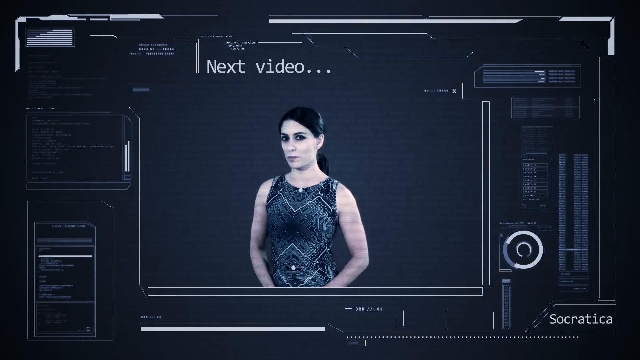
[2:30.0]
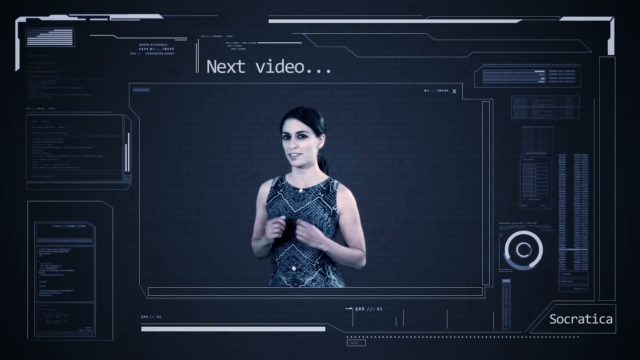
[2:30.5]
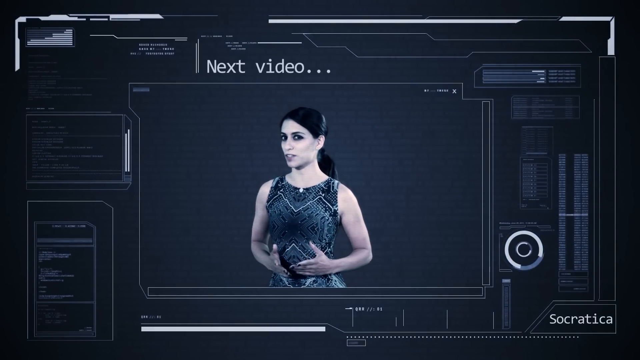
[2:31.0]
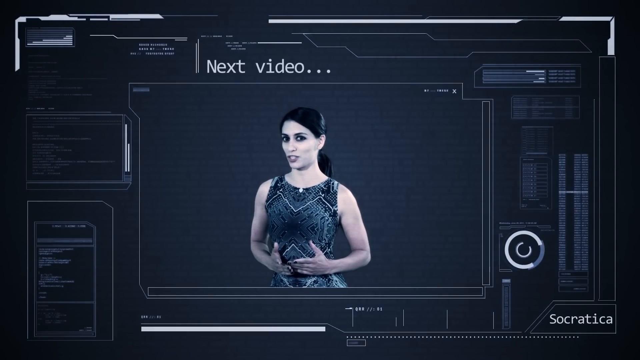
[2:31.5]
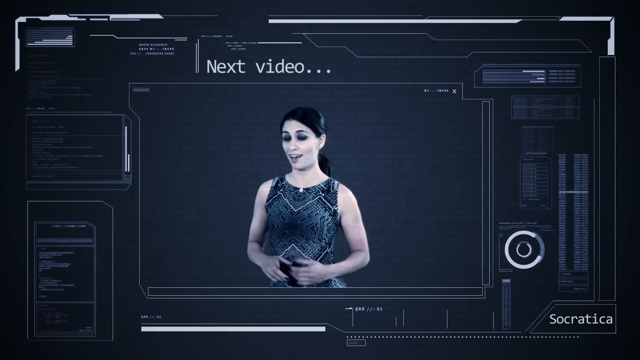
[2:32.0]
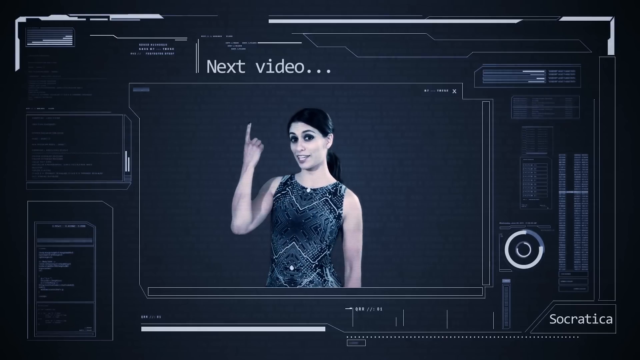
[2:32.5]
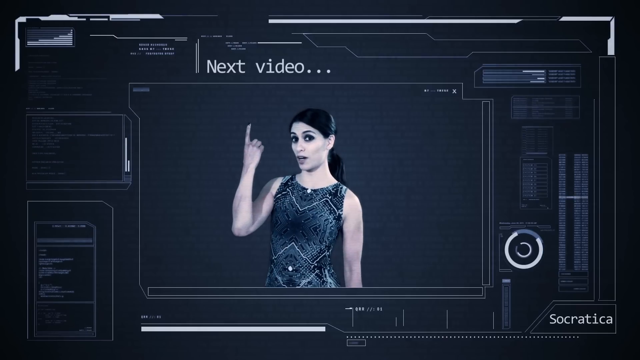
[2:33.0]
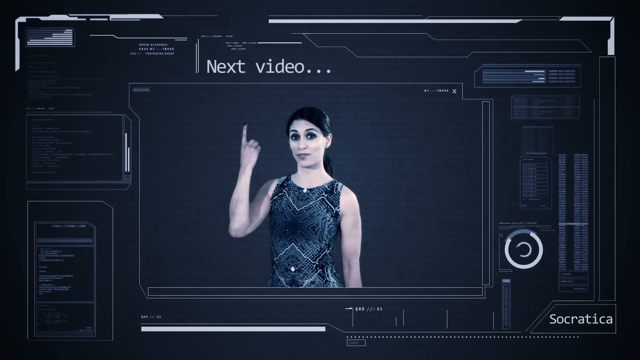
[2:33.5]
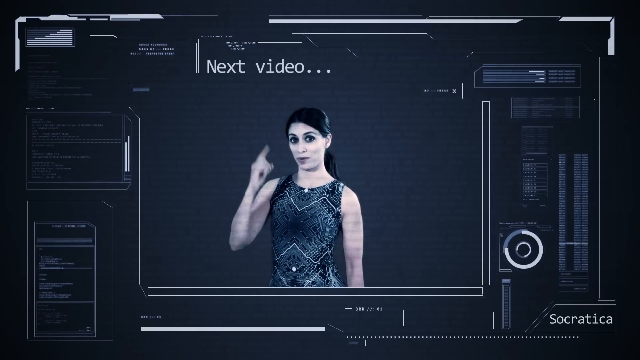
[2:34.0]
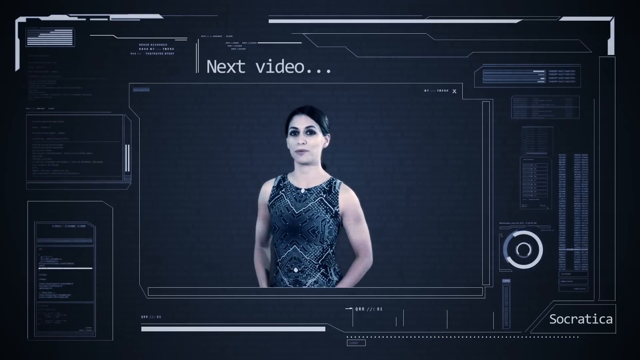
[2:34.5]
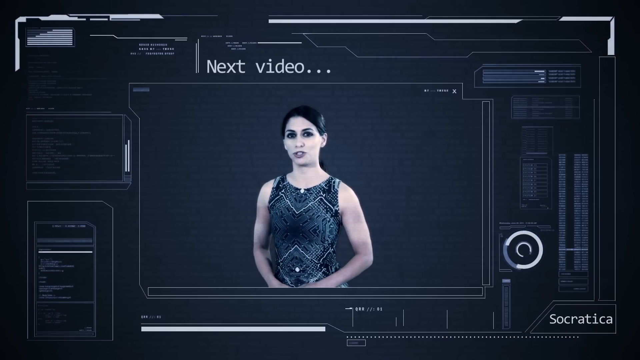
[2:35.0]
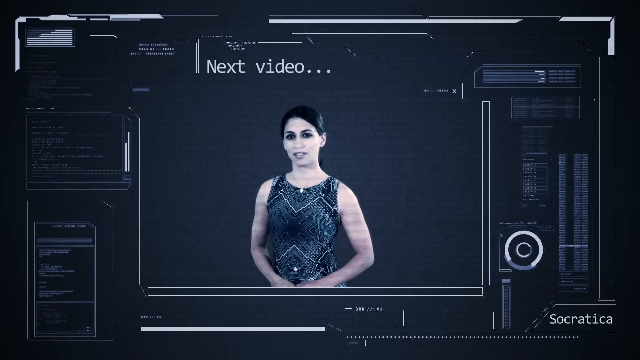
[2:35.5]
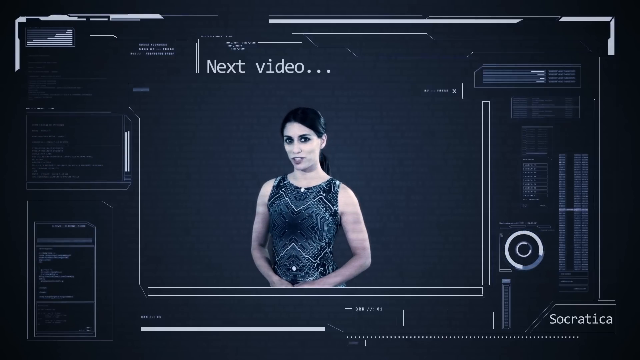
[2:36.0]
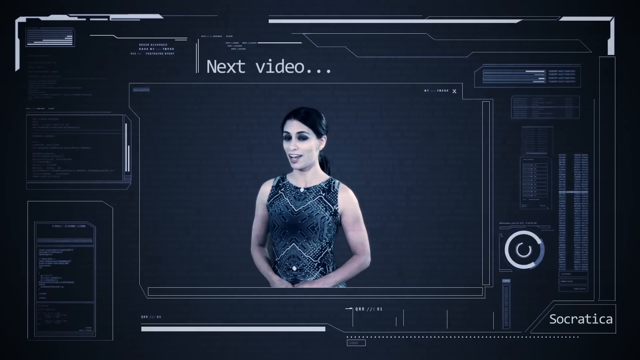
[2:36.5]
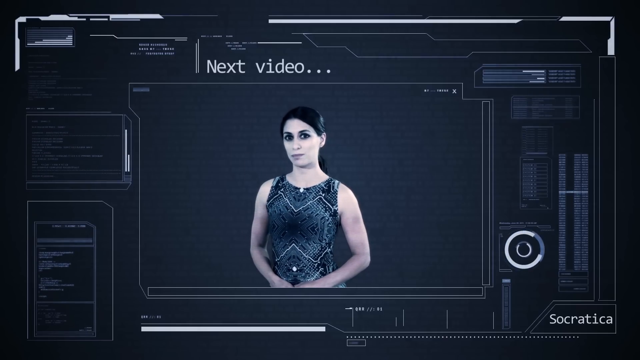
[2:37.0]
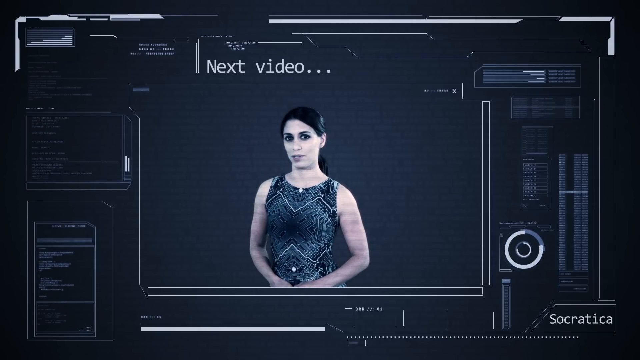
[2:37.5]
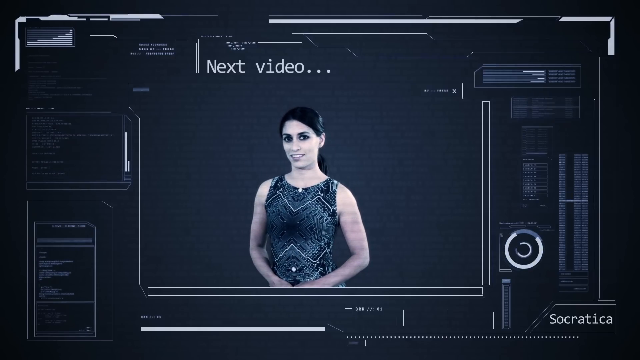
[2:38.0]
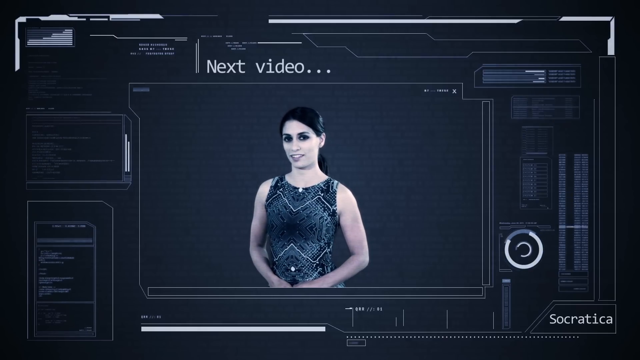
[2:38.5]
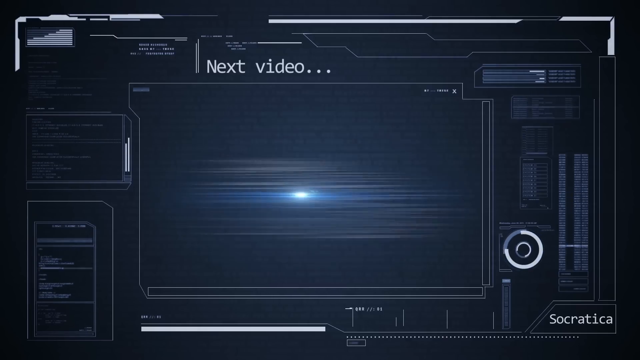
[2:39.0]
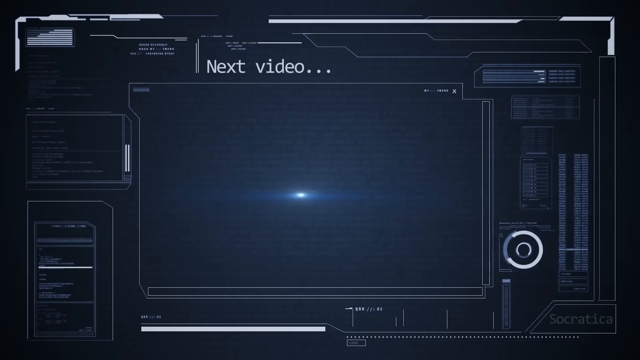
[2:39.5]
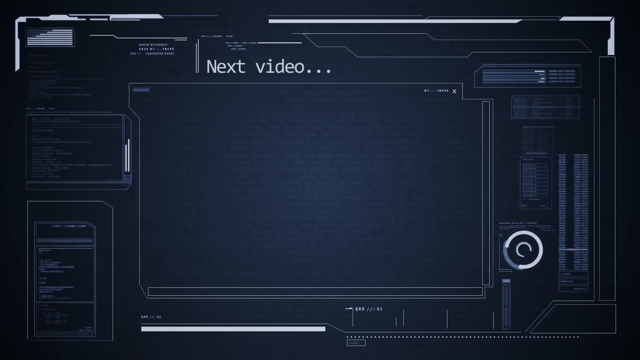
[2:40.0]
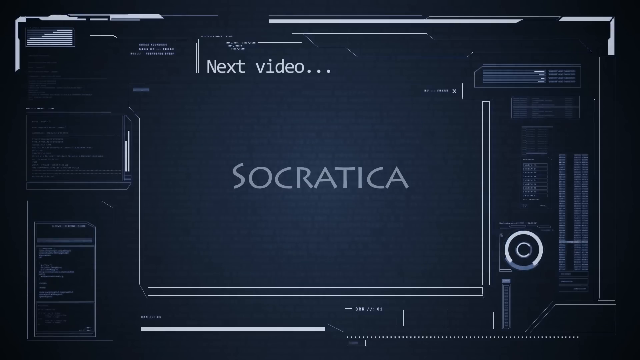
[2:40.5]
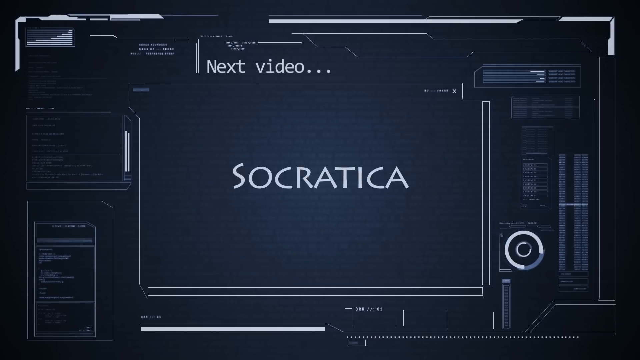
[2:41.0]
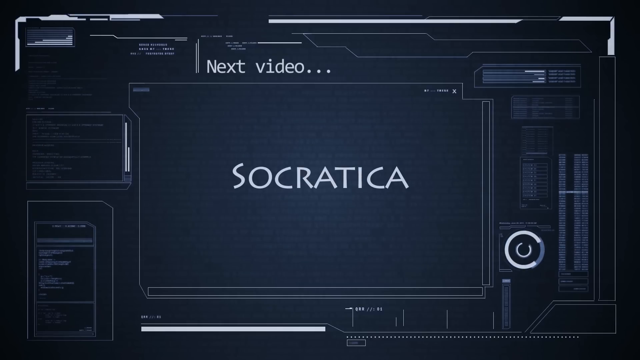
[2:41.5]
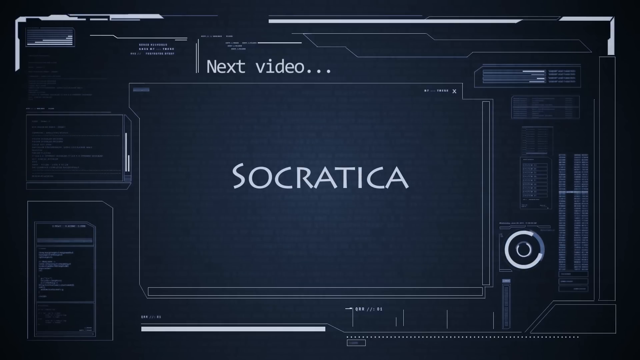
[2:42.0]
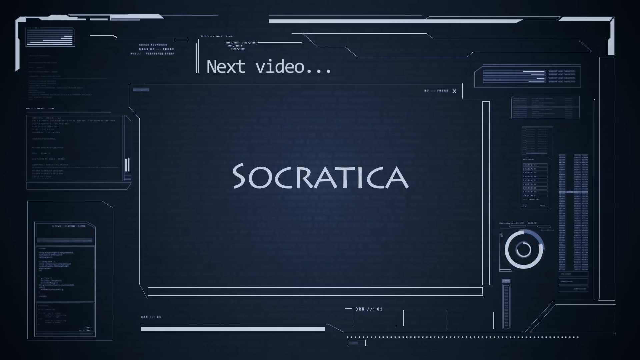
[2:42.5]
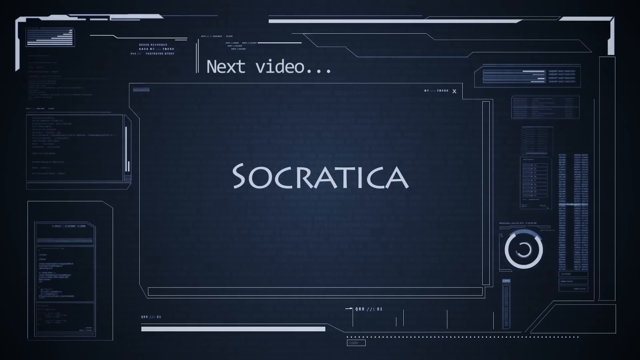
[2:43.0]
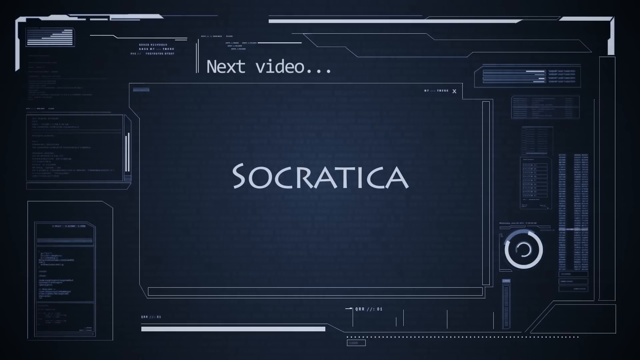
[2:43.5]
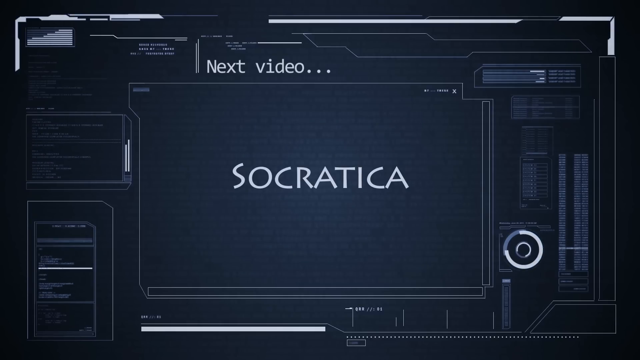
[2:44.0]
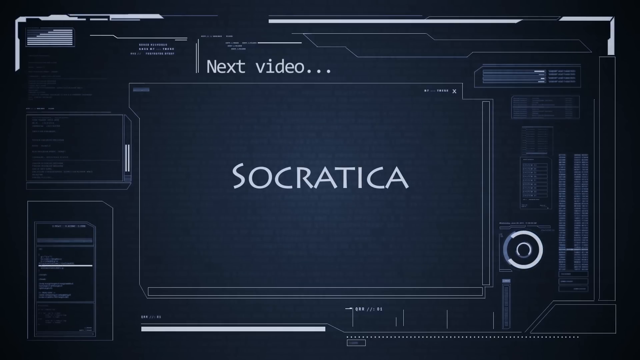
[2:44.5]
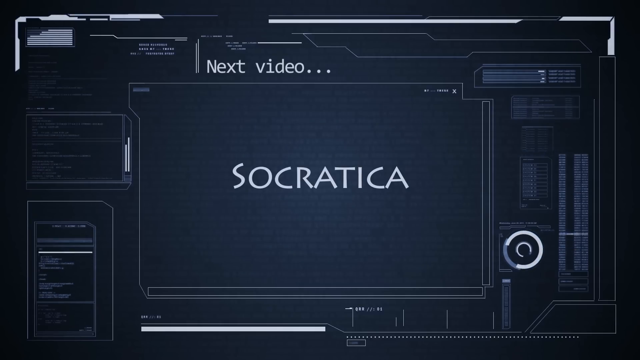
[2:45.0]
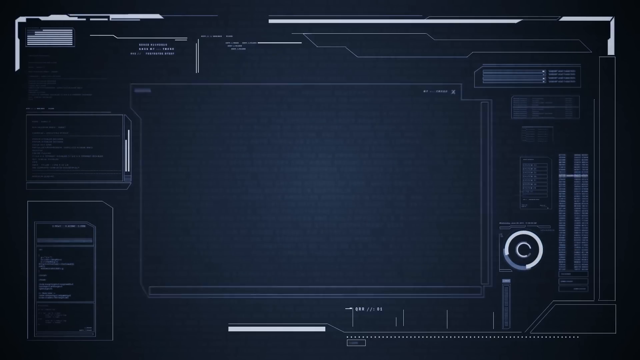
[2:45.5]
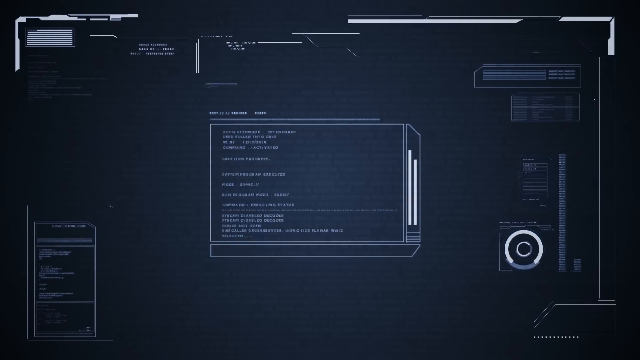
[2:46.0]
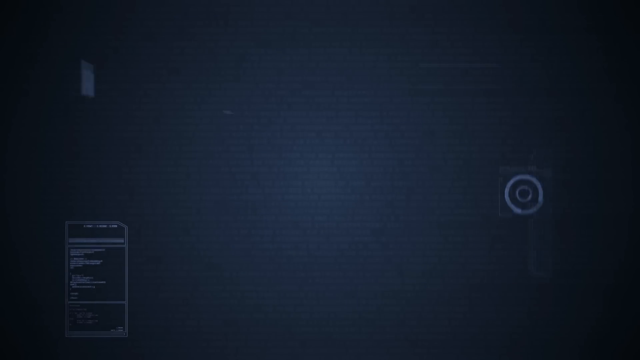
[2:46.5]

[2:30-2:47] The background has a dark blue technological, coding theme, with various pieces of code and chip-shaped objects. In the center of the screen a woman stands and talks. She appears fairly young, in her 30s, with dark black hair in a ponytail, white skin, and a blue dress. Above her, text reads "next video...". She talks to the screen while gesturing with her hands in a chopping motion. She then points with the index finger of her right hand up at the "next video" text above her. She puts her hand down and continues talking toward the screen with her hands now resting at her belly. She then disappears from the screen, replaced by white text reading "Socratica", and the video fades out.